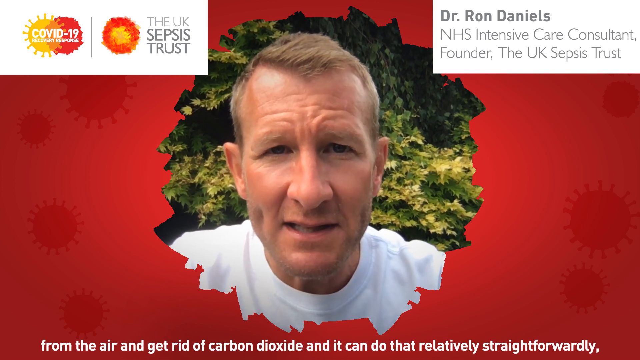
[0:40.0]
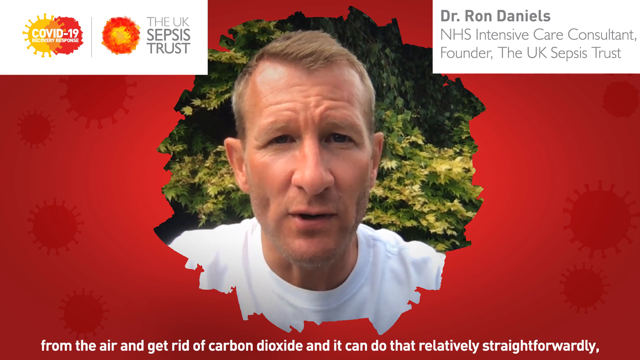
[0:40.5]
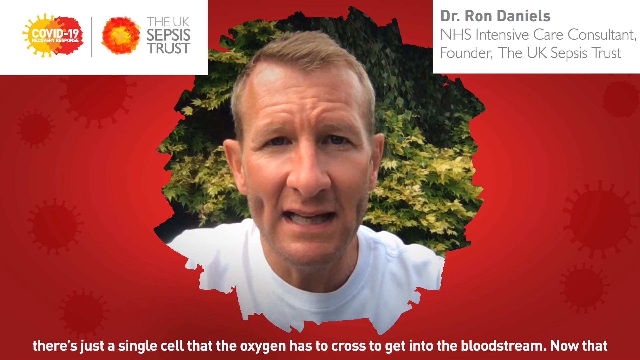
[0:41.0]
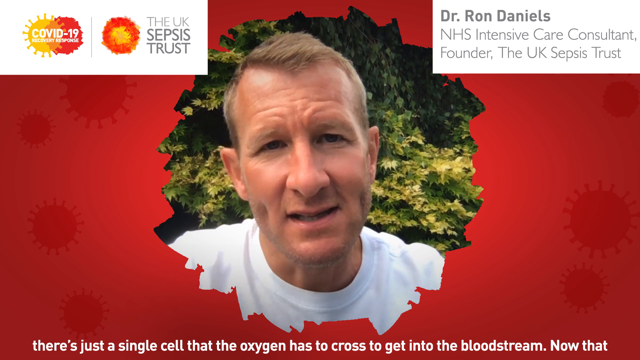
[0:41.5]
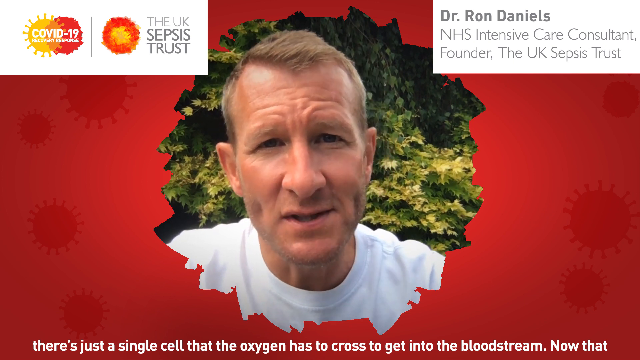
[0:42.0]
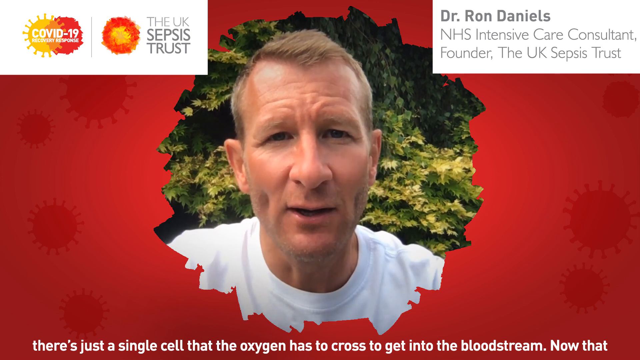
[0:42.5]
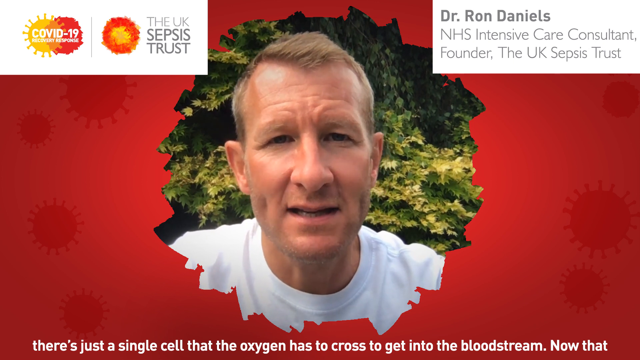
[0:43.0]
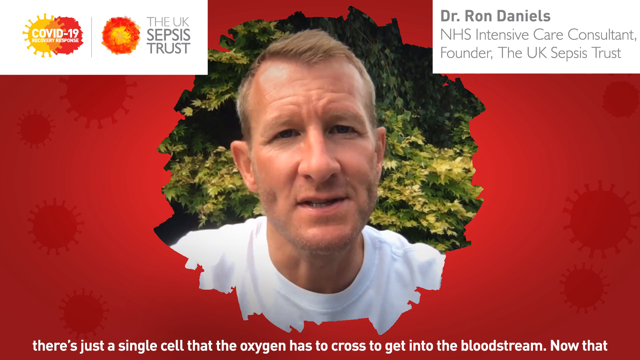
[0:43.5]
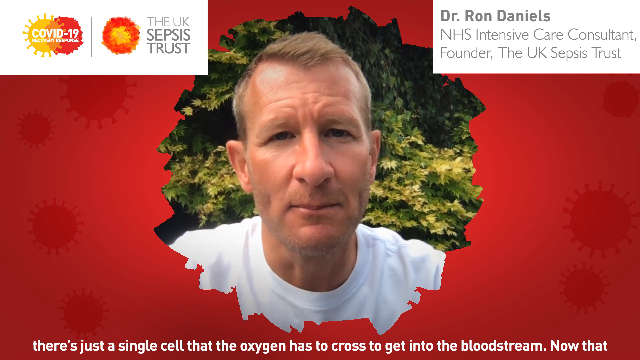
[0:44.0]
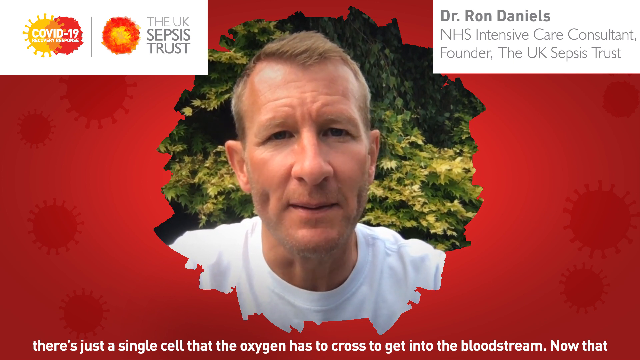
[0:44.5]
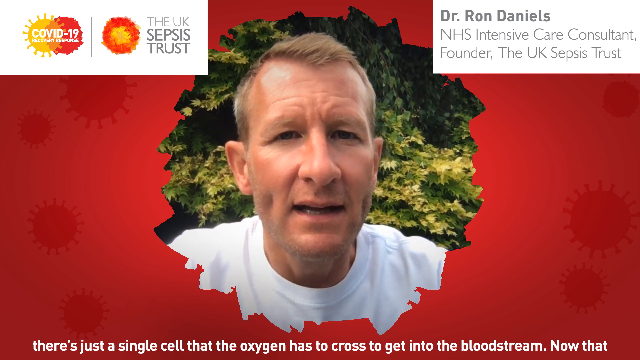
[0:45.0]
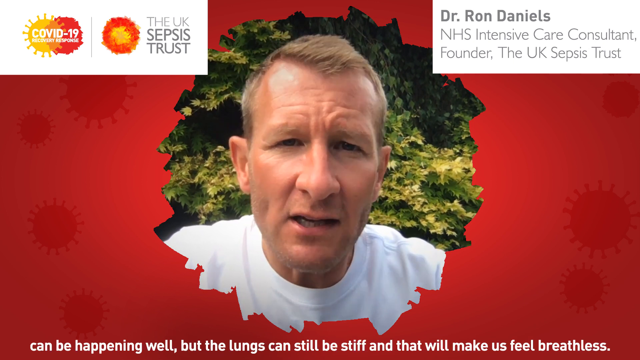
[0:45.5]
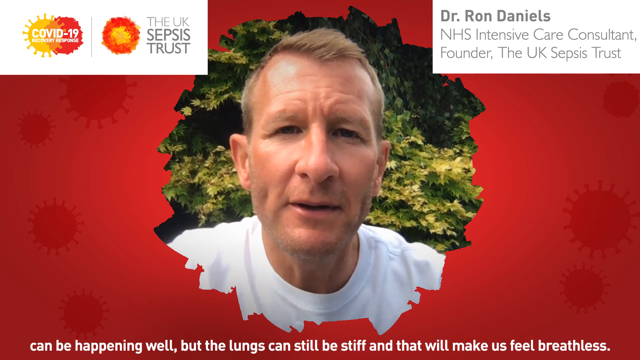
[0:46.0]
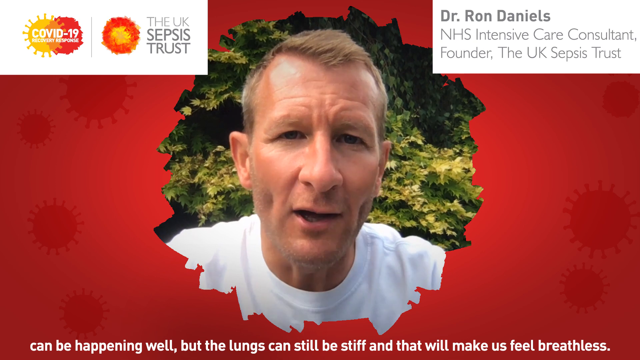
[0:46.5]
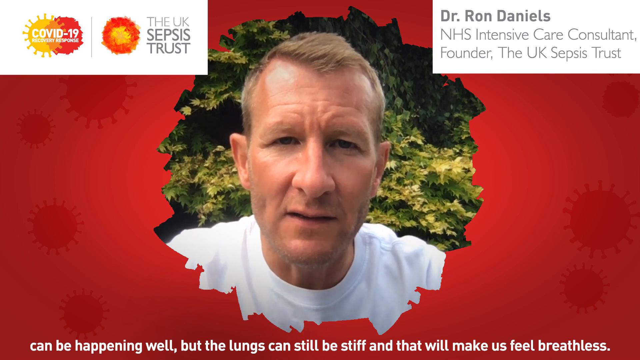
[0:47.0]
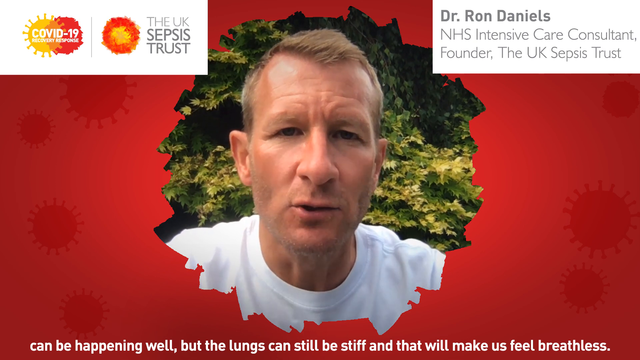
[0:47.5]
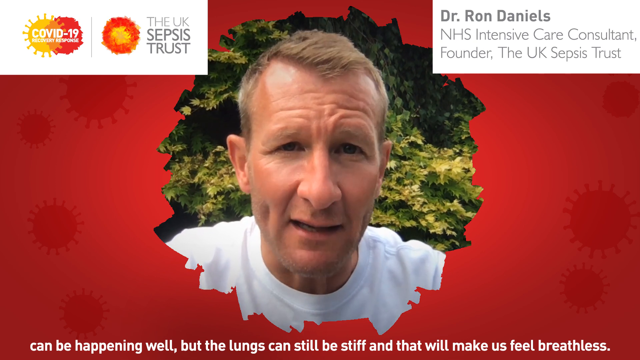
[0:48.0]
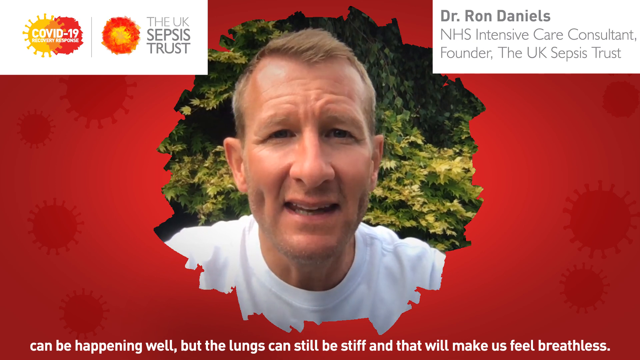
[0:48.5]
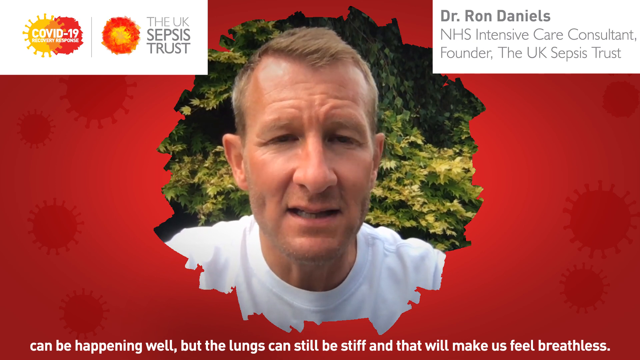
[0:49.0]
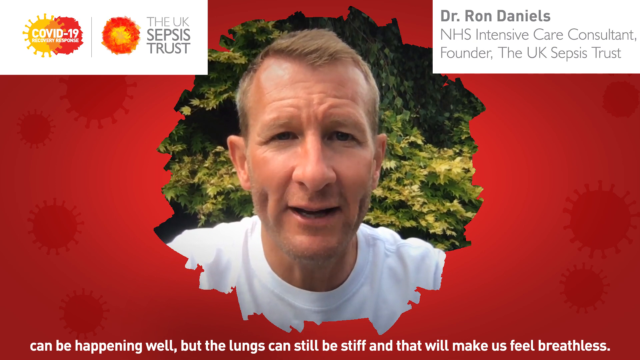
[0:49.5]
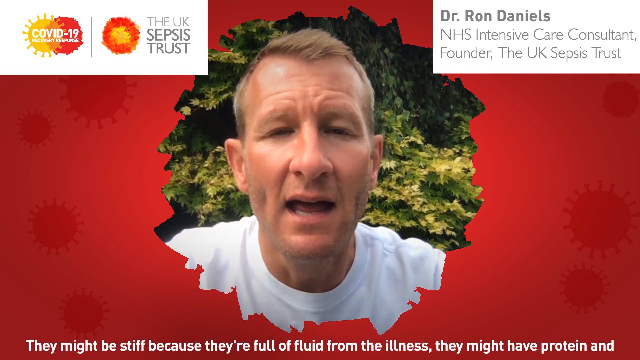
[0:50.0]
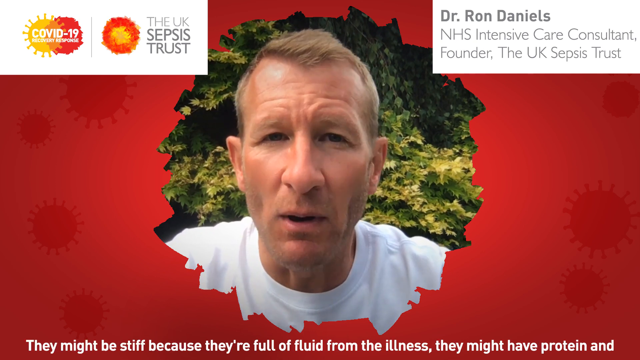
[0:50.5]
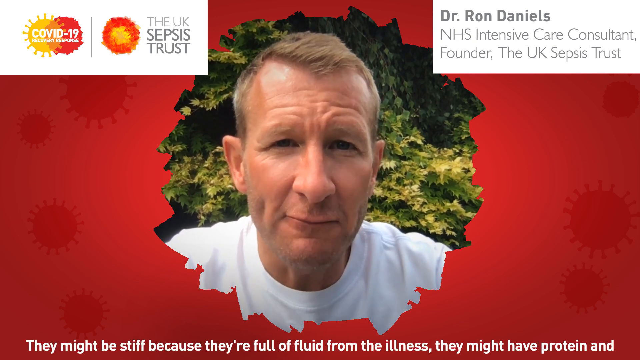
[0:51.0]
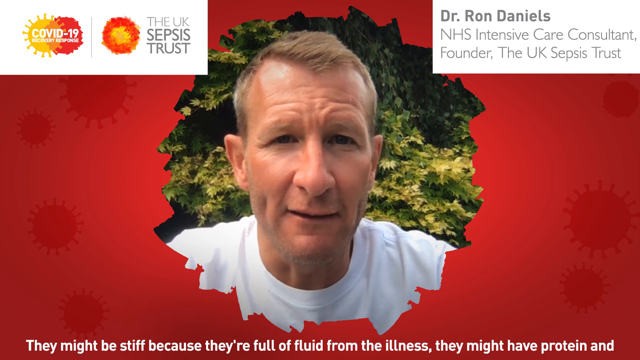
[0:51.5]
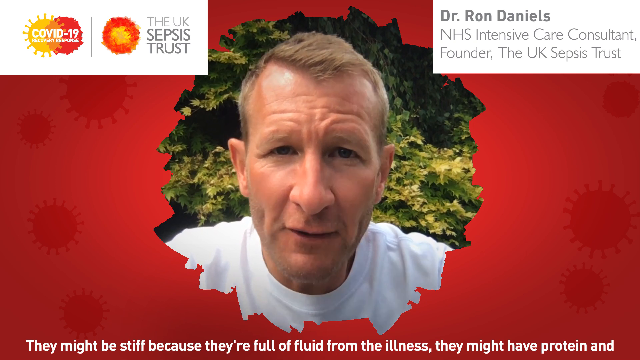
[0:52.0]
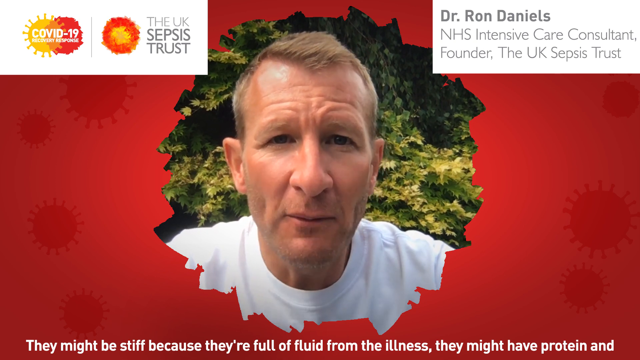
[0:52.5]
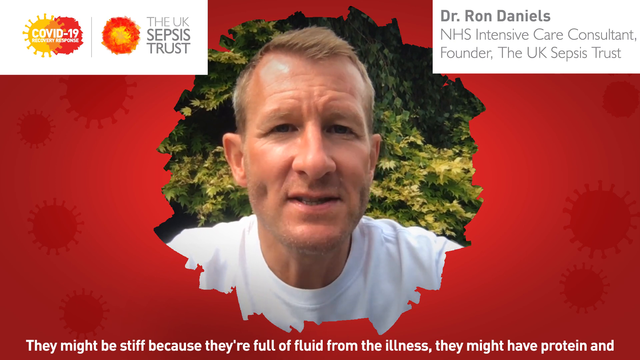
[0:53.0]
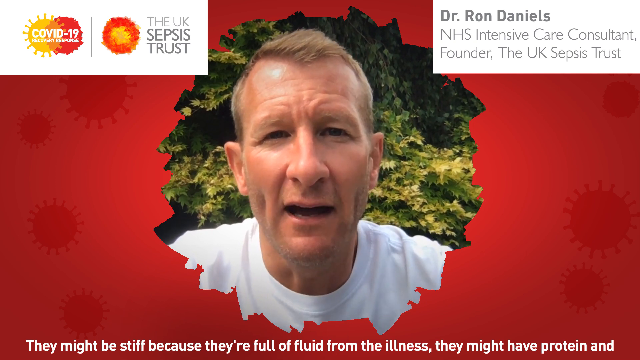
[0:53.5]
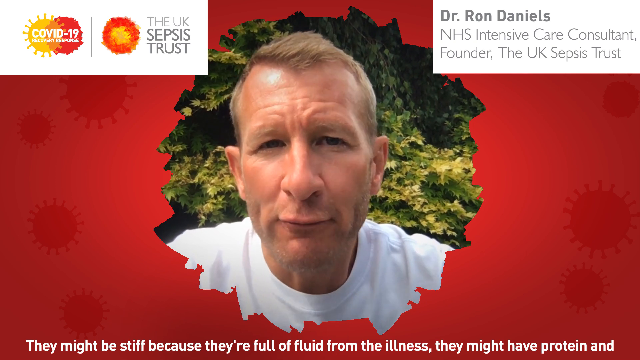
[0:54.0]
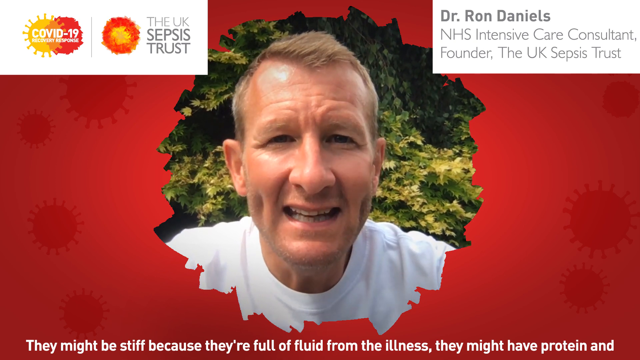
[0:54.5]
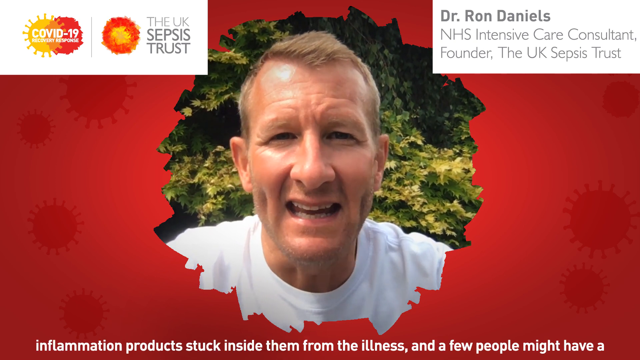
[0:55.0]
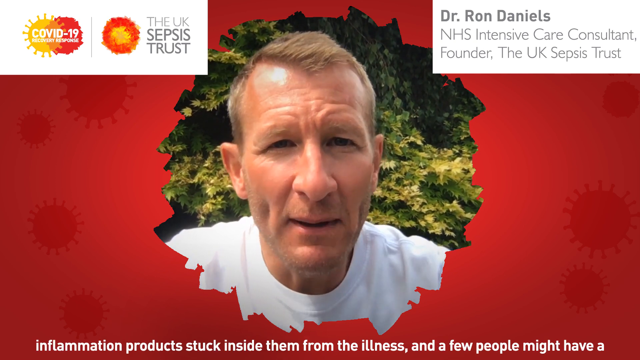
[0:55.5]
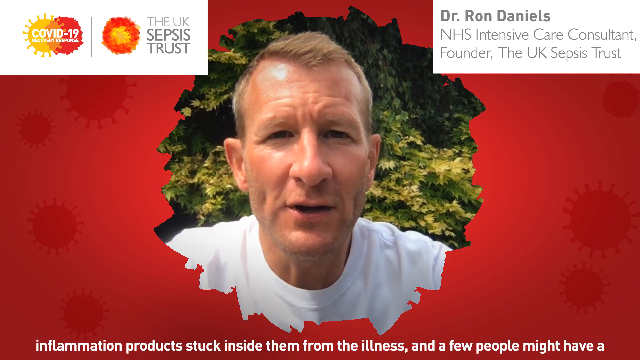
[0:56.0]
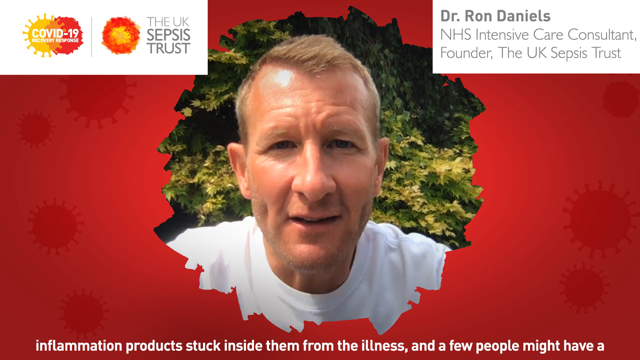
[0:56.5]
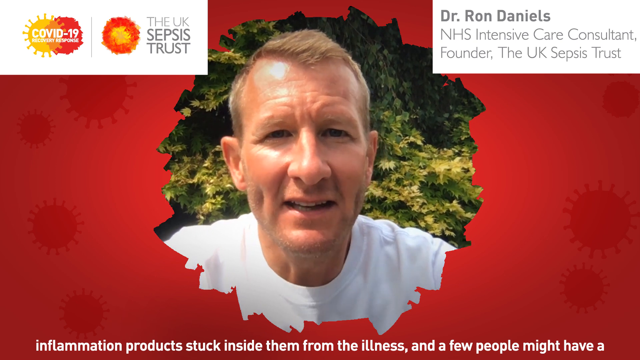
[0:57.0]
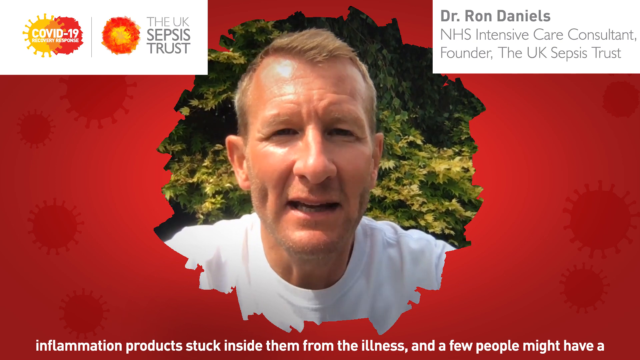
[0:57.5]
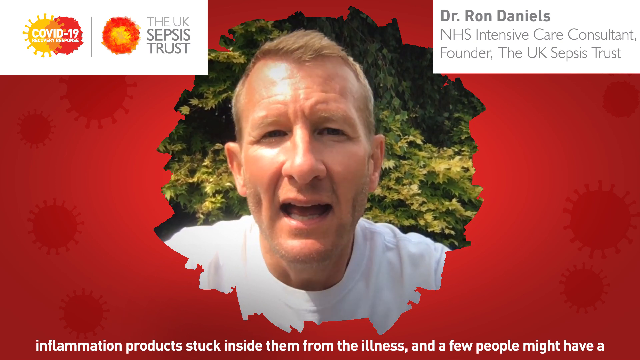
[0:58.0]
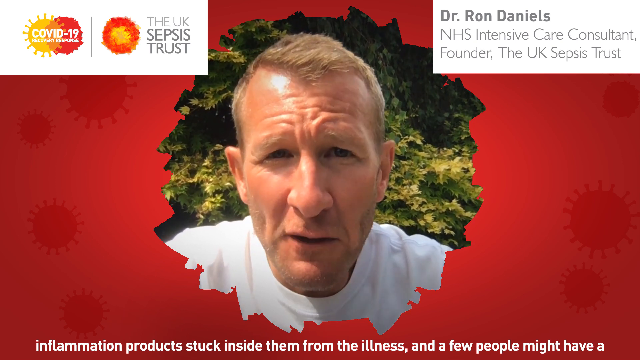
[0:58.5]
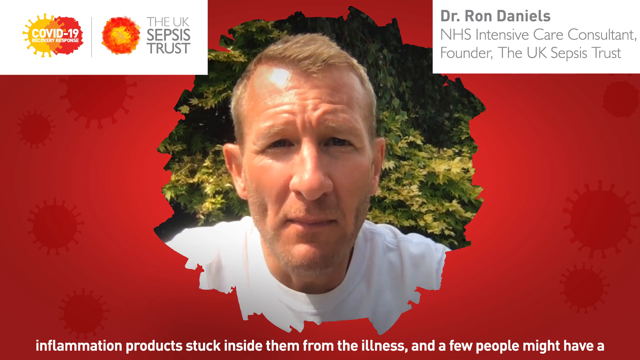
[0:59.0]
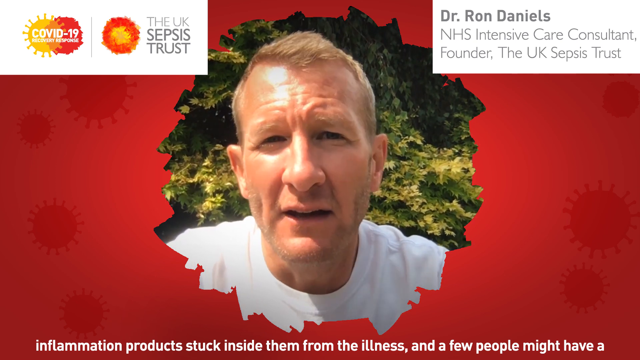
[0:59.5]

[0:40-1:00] Text below the man, in front of his face, shows what he is saying, including "There's a single cell that the oxygen has to cross to get in the bloodstream," and then the text stops. The sort of COVID-19 recovery response logo is still at the top left, showing a crown-like, corona-style yellow and red circle with rays emanating from it, with a red sort of blotch beside it to the right. To the right of that is another sort of reddish and yellow blotch, and the words "the UK sepsis trust" are to the right of that. The man is identified as Dr. Ron Daniels, noted as the NHS intensive care consultant and founder of the UK Sepsis Trust.